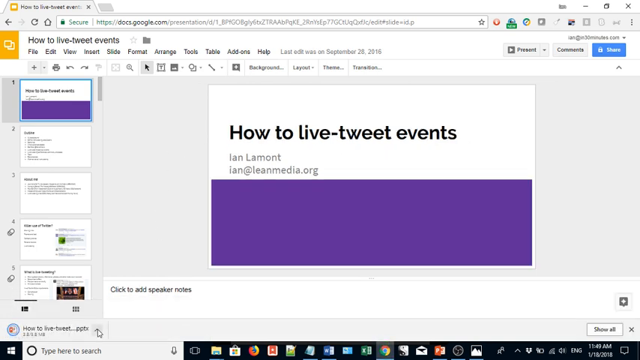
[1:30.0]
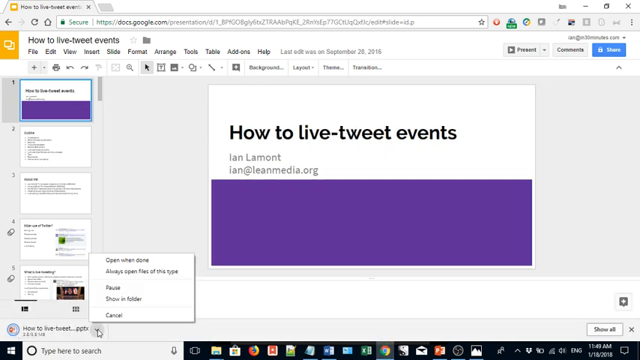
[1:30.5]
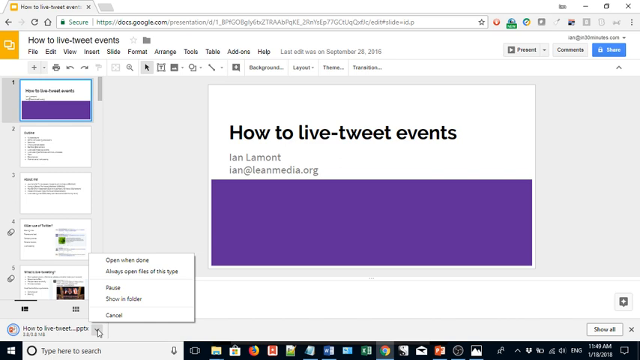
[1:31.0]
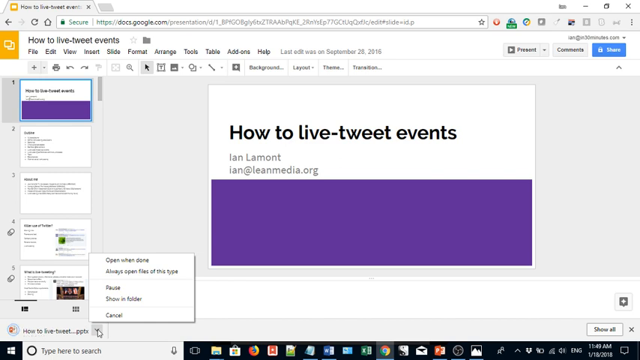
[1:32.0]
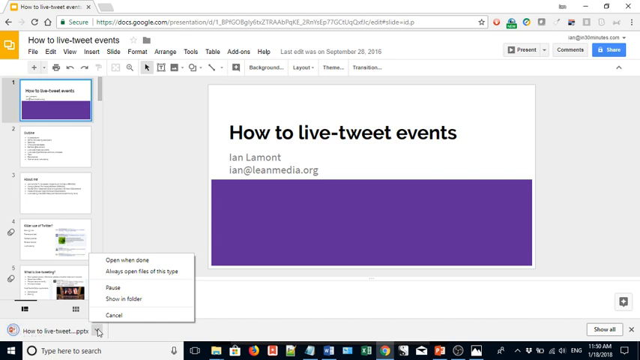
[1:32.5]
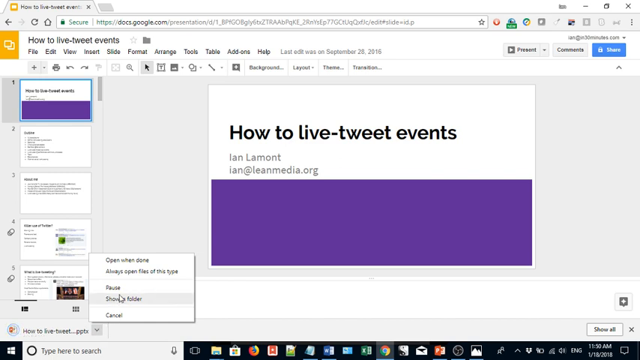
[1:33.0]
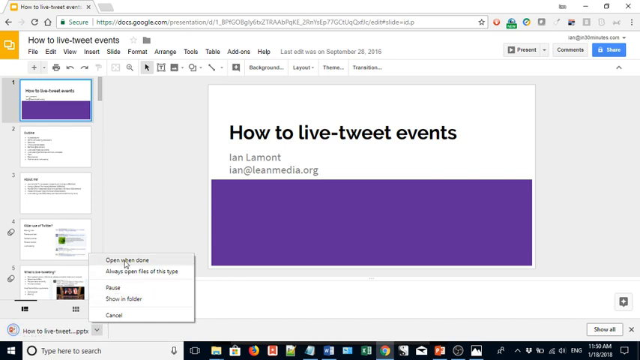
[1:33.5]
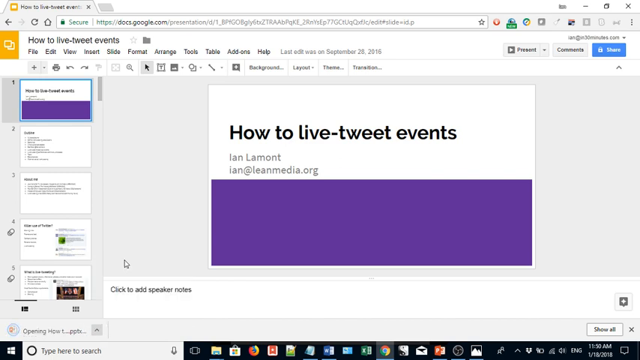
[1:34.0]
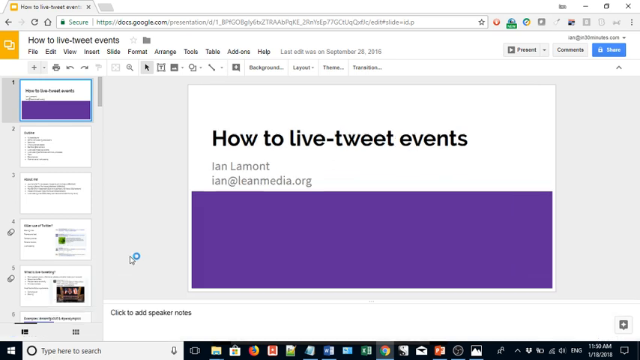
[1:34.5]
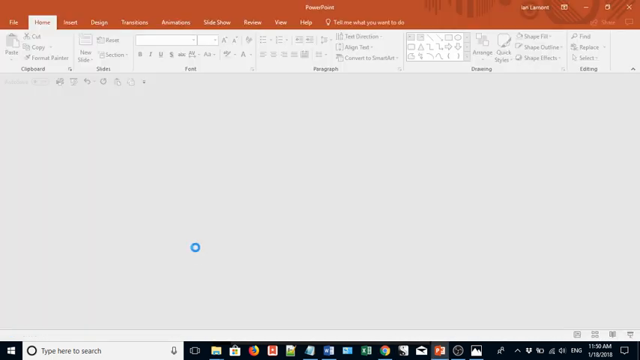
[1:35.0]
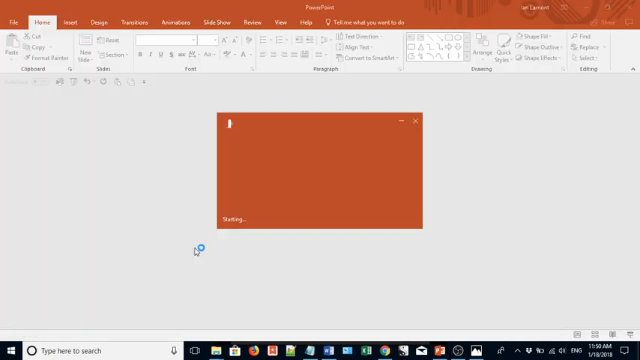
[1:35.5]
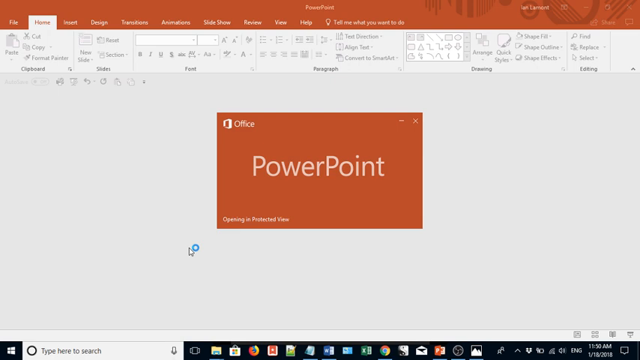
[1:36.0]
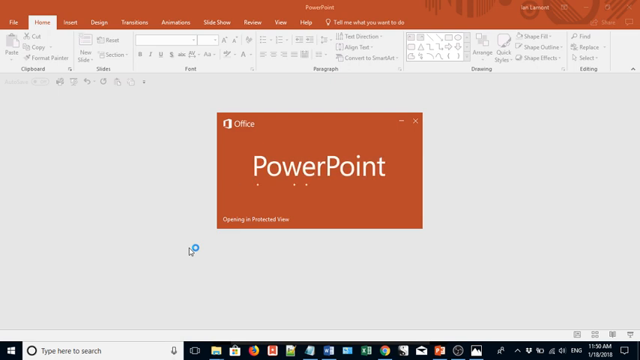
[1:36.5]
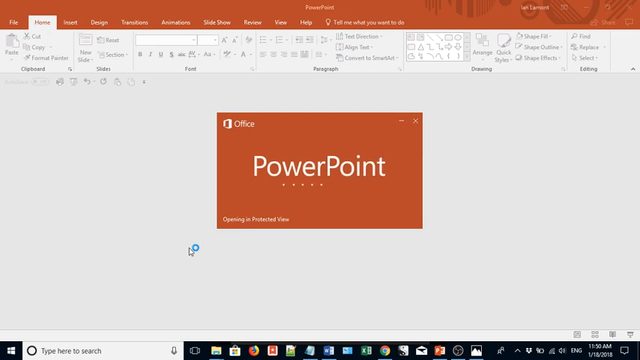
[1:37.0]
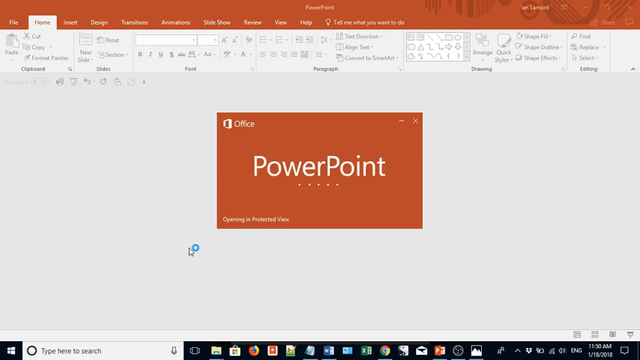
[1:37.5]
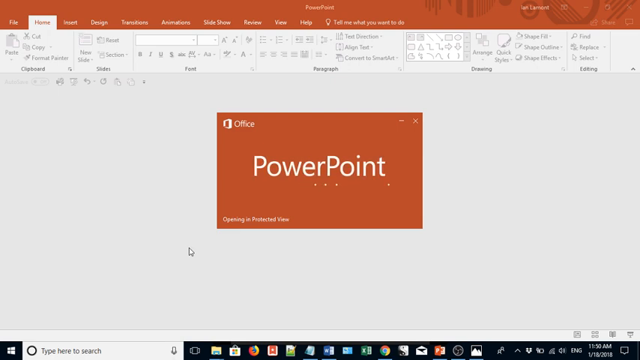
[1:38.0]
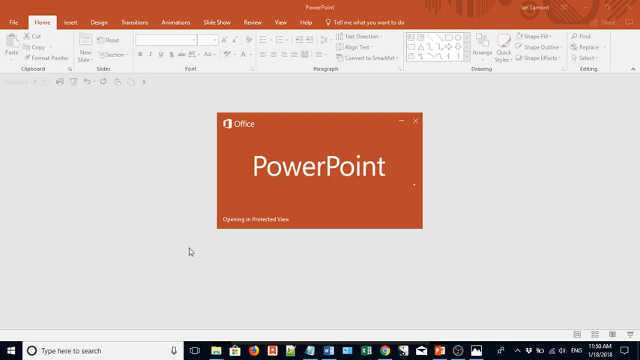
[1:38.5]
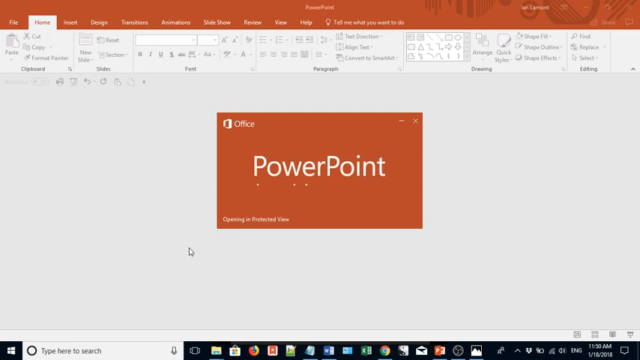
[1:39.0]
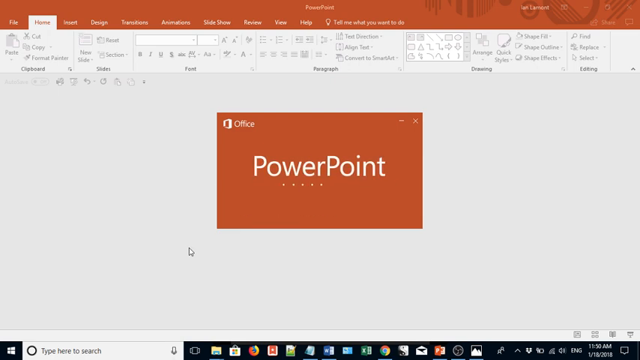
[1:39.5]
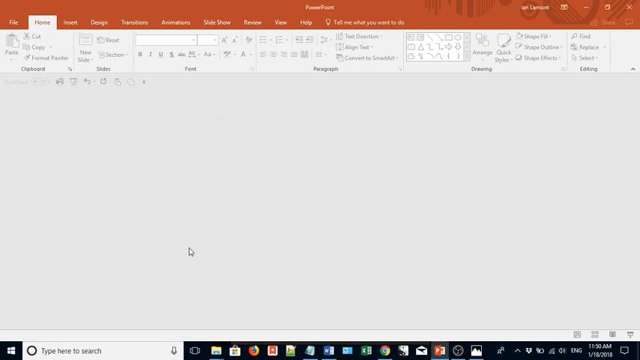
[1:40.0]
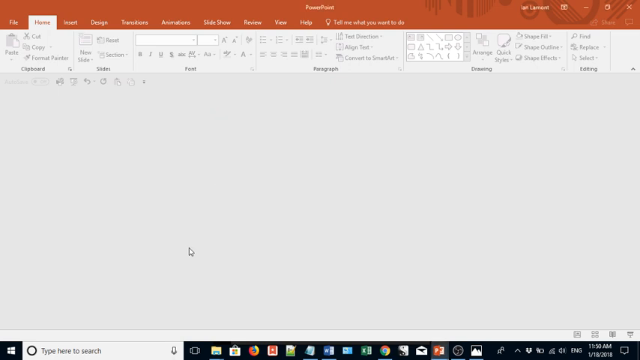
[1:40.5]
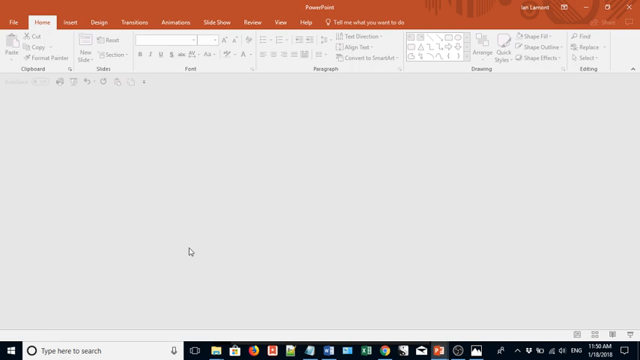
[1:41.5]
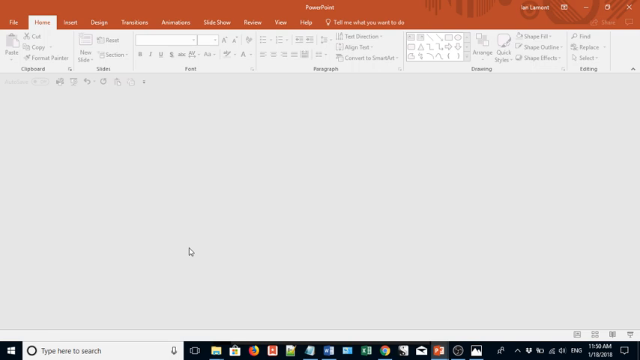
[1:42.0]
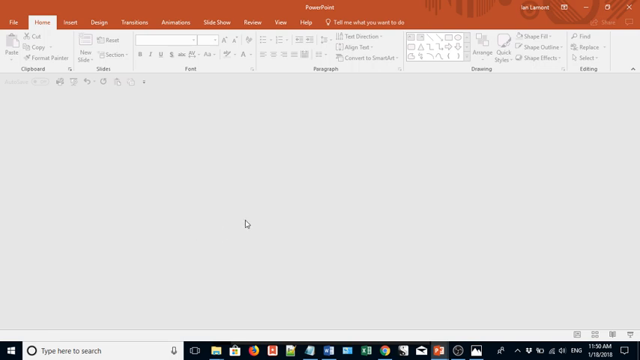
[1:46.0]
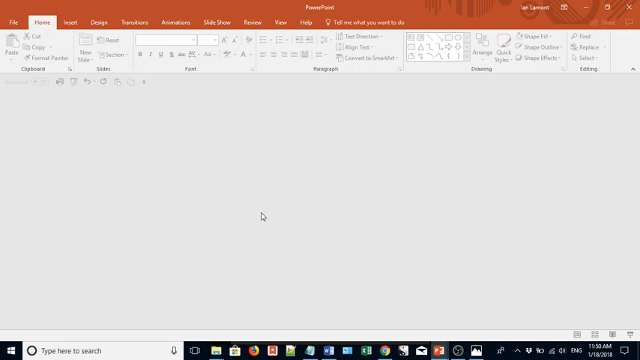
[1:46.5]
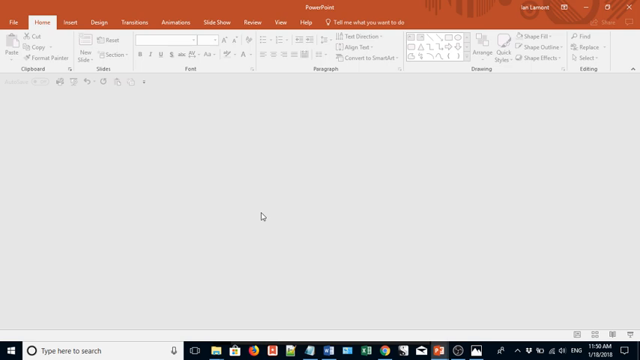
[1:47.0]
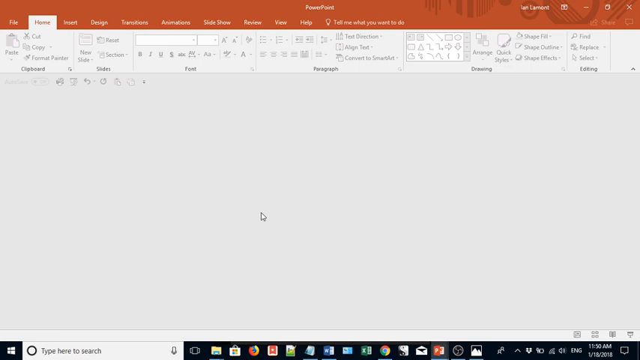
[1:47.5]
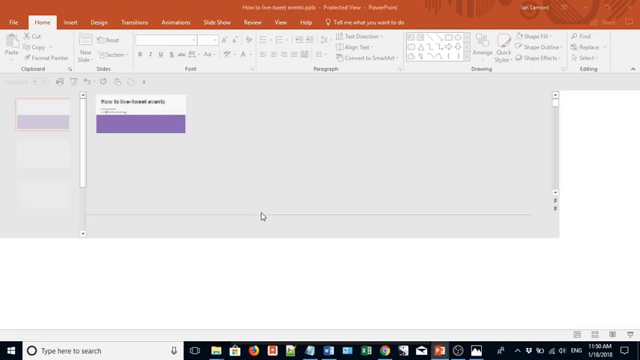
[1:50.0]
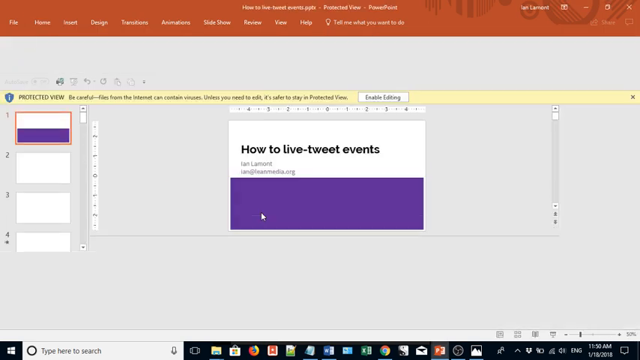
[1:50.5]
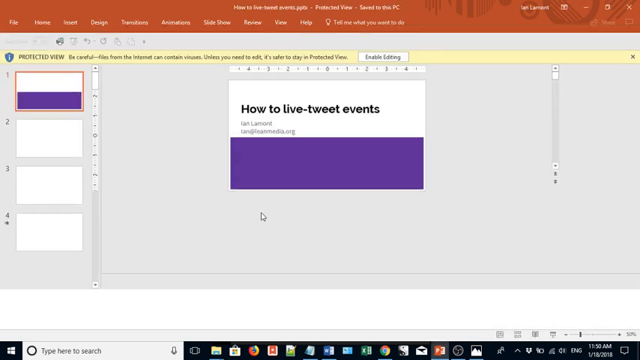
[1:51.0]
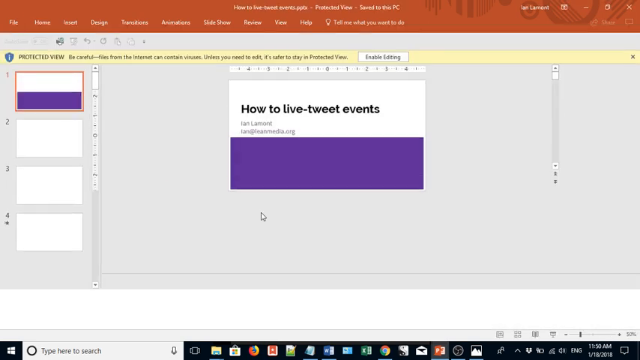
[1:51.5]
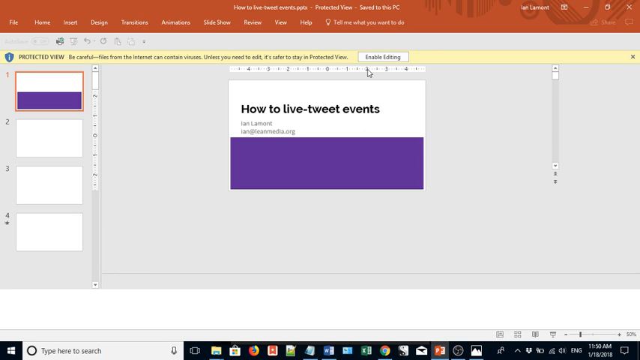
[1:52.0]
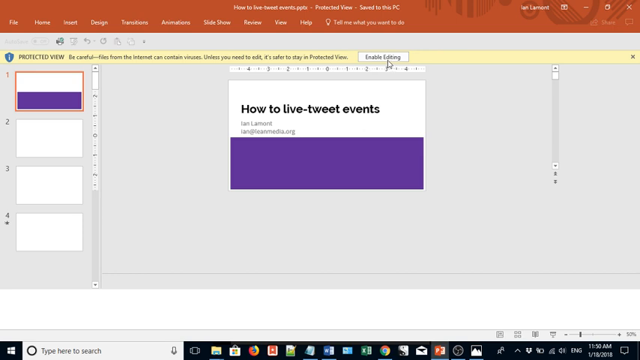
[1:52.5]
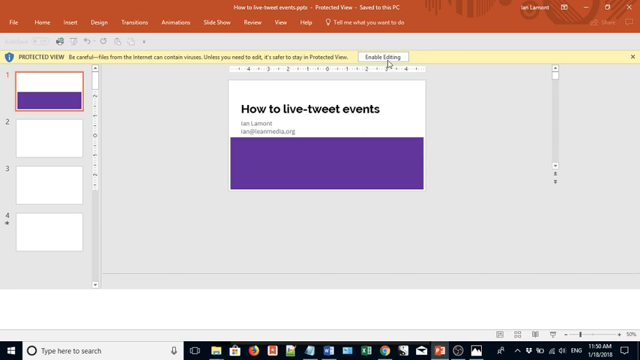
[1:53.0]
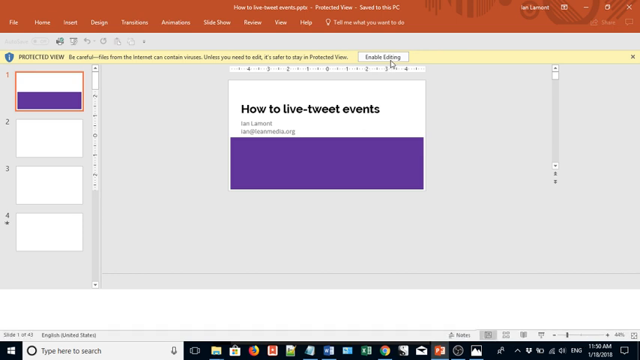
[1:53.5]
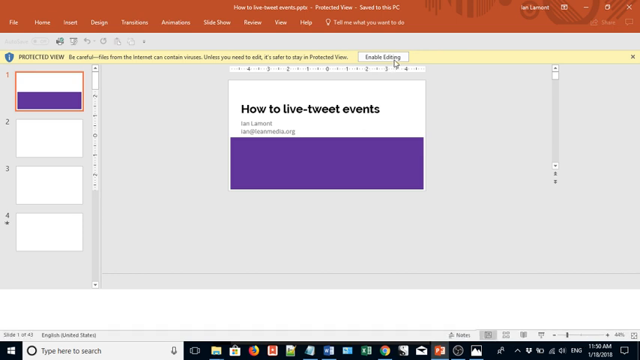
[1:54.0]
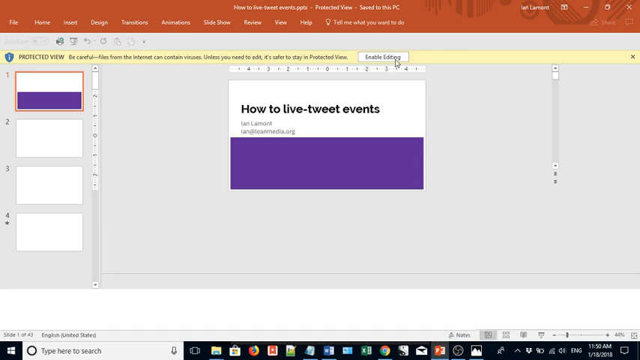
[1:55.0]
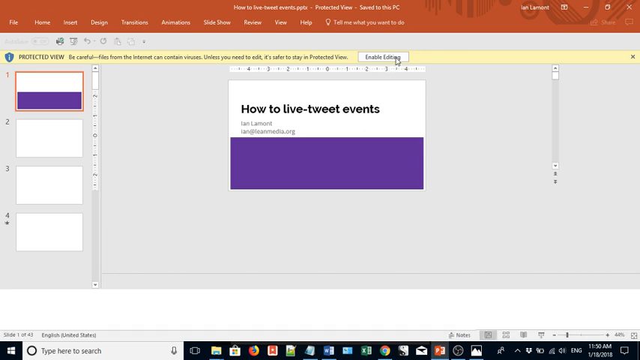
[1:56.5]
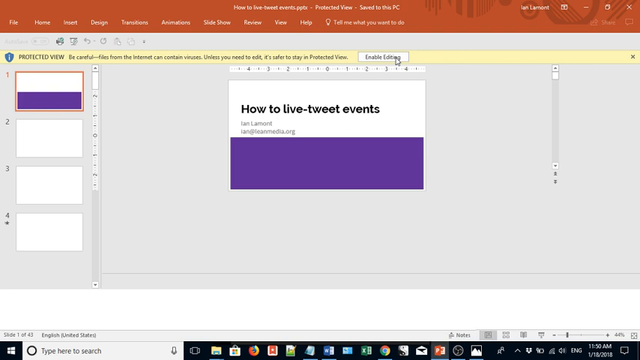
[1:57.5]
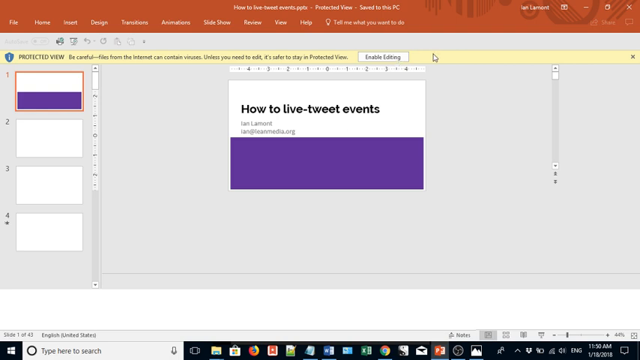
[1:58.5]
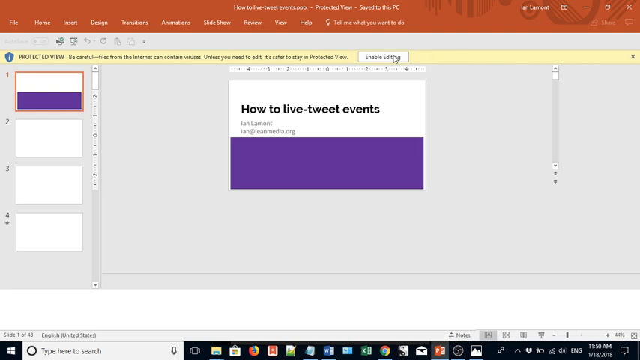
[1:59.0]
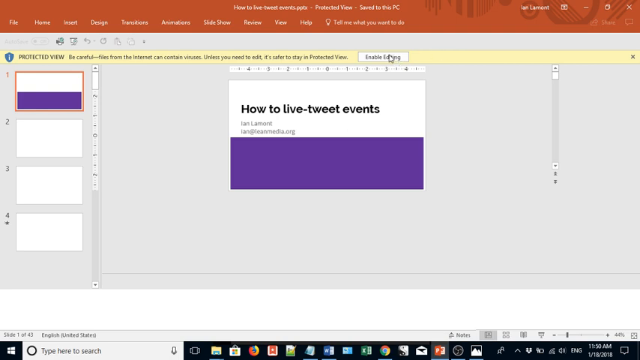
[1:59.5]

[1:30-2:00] A Google Docs presentation titled "How to Live Tweet Events" is open on slide one, which has a white background with "how to live-tweet events" at the top in bold black text, "Ian Lamont" and the email address "ian@leanmedia.org" beneath it, and a large purple rectangular box covering the bottom half of the slide. At the bottom of the screen, a grey pop-up shows a downloaded file called "how to live-tweet...pptx." The user clicks the drop-down menu icon and selects the first option, "open when done." Another window opens in PowerPoint: a large dark red rectangular box appears in the middle of the screen with "powerpoint" in white letters and what look like blinking loading progress dots. The box disappears and the screen stays grey for a few seconds. Then the presentation loads, showing the same slide 1 from the Google Docs presentation, with the heading "how to live-tweet events" and the purple rectangular box at the bottom, now in PowerPoint. Across the top of the screen is a yellow rectangular bar reading "protected view. Be careful. Files from the internet can contain viruses. Unless you need to edit, it's safer to stay in protected view." Next to it is a white button with black text reading "enable editing," and the cursor hovers over it.